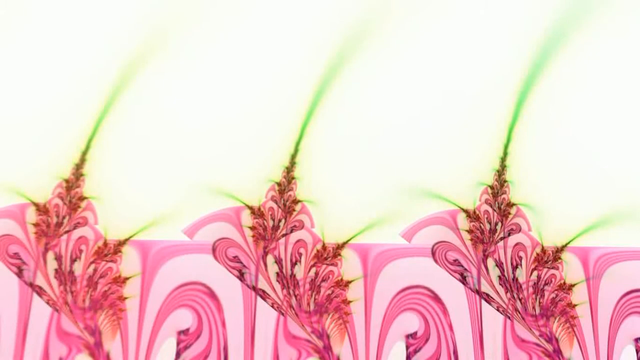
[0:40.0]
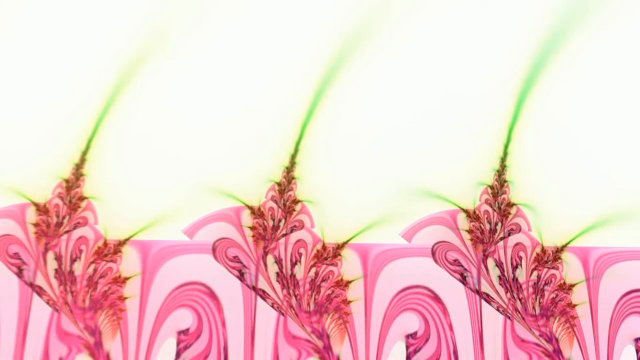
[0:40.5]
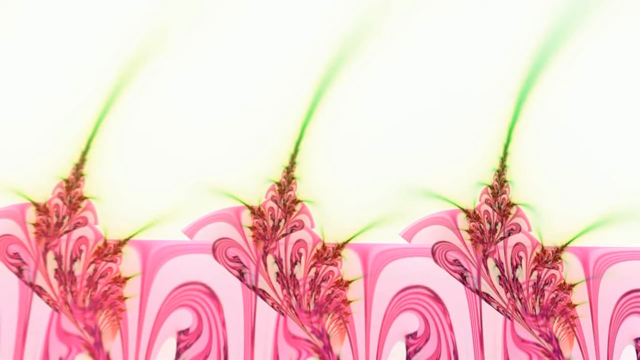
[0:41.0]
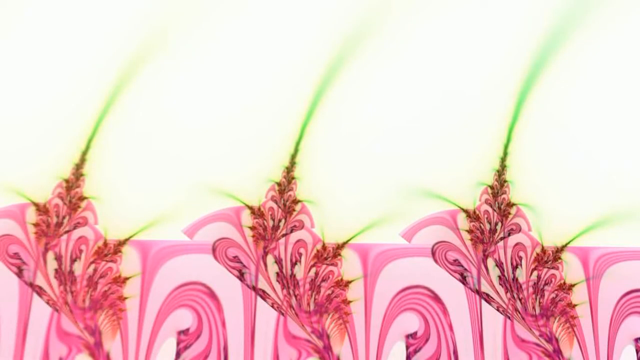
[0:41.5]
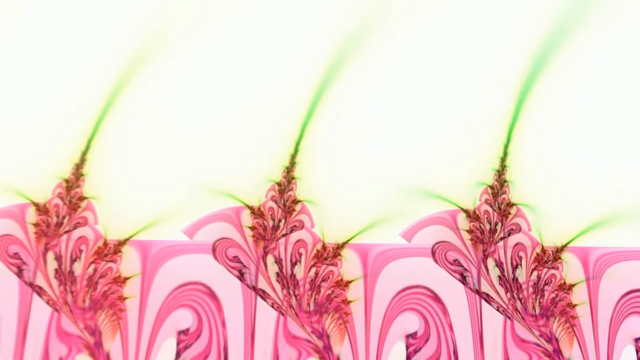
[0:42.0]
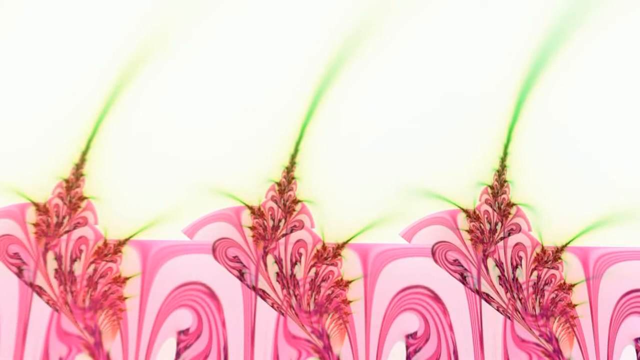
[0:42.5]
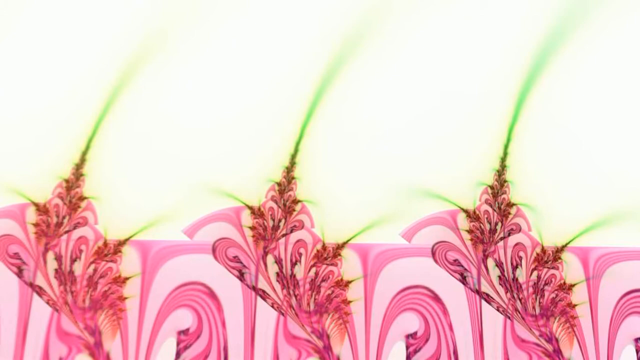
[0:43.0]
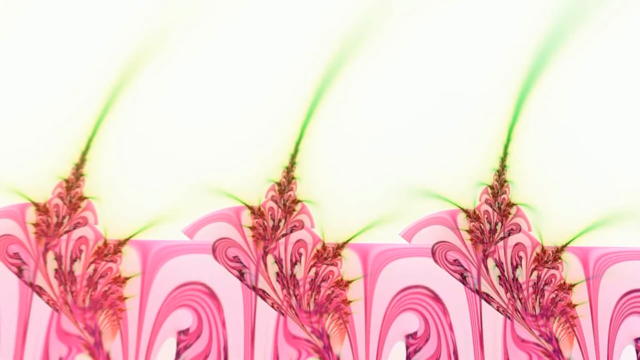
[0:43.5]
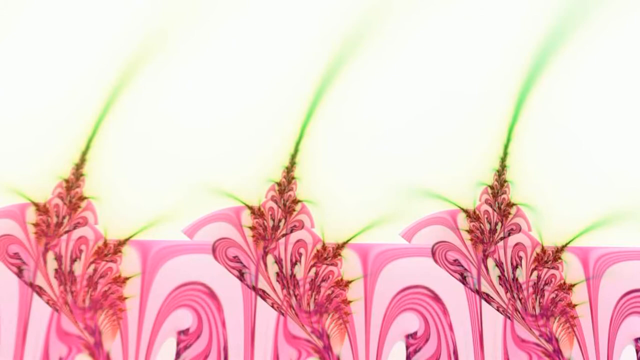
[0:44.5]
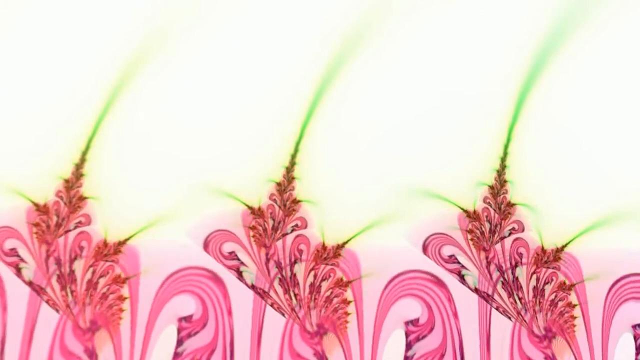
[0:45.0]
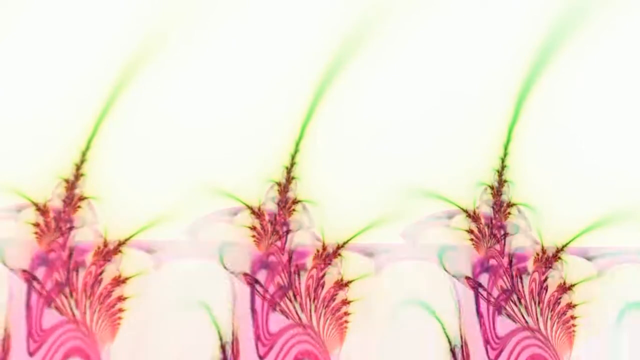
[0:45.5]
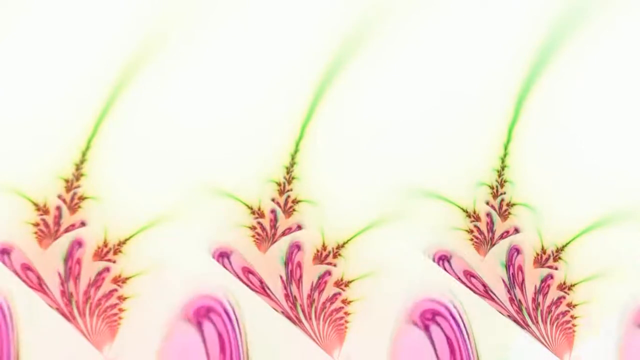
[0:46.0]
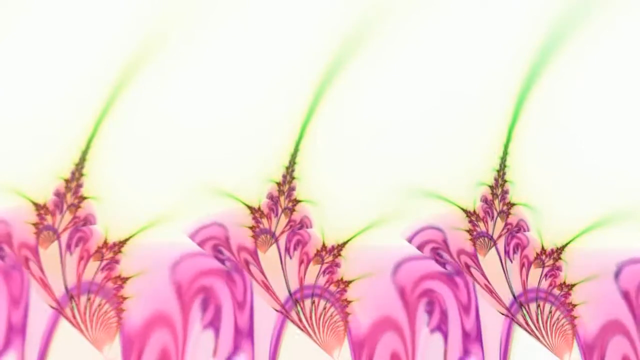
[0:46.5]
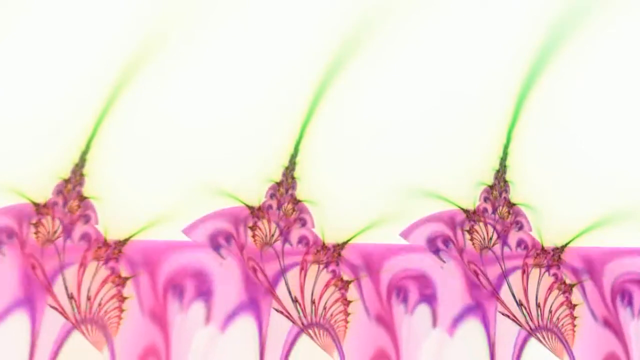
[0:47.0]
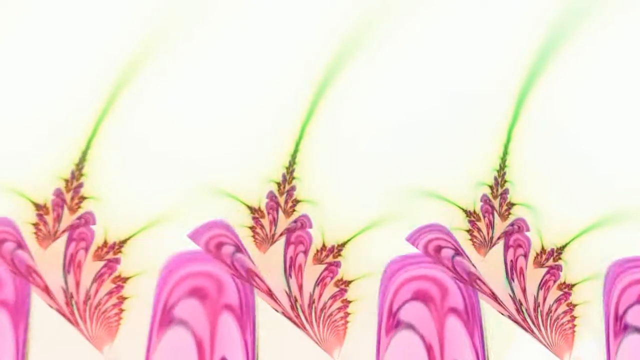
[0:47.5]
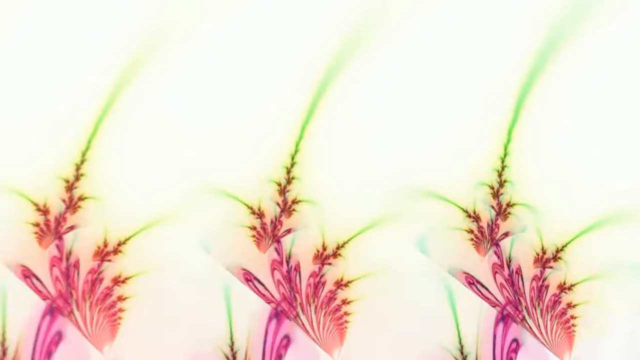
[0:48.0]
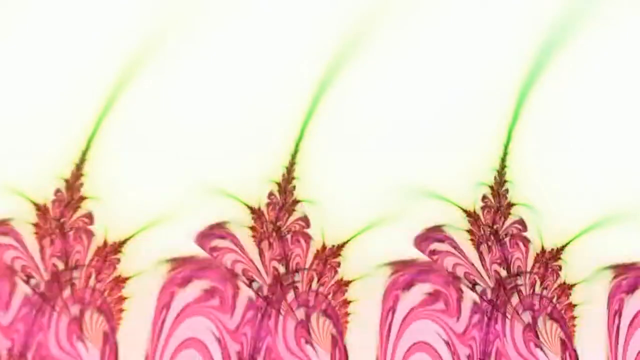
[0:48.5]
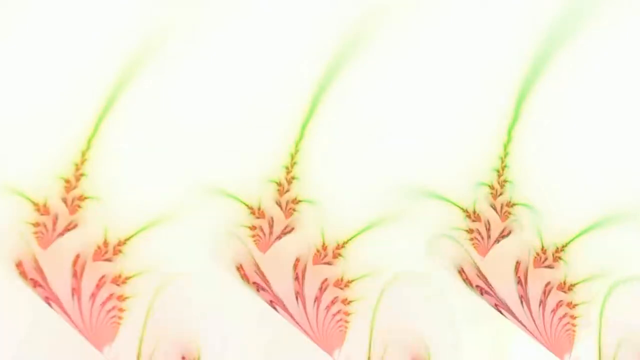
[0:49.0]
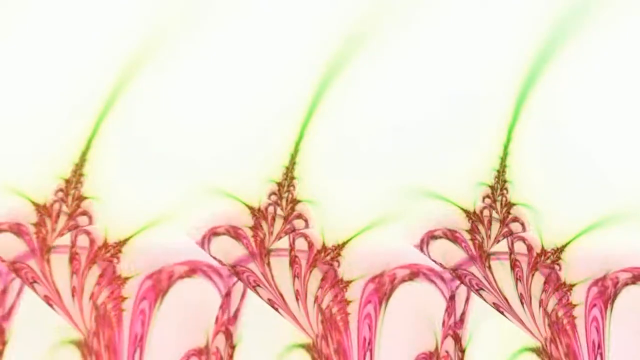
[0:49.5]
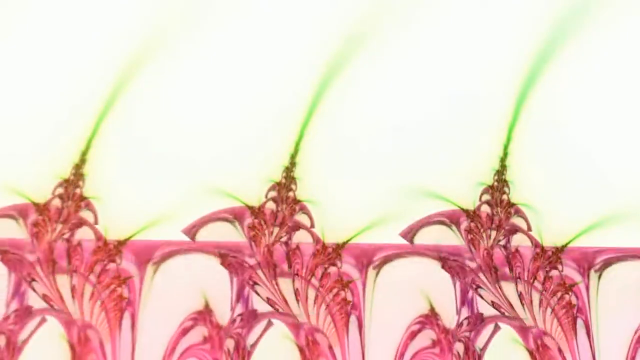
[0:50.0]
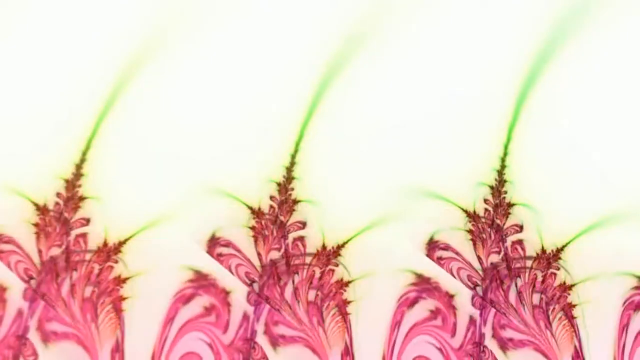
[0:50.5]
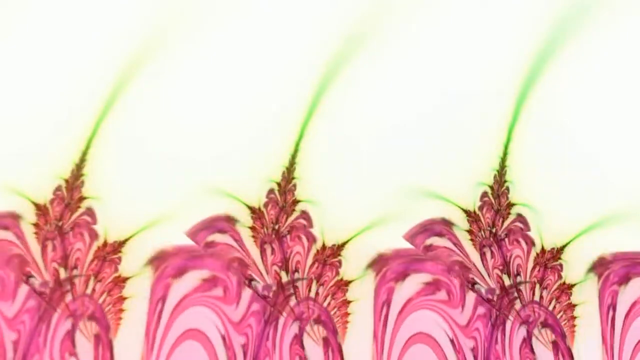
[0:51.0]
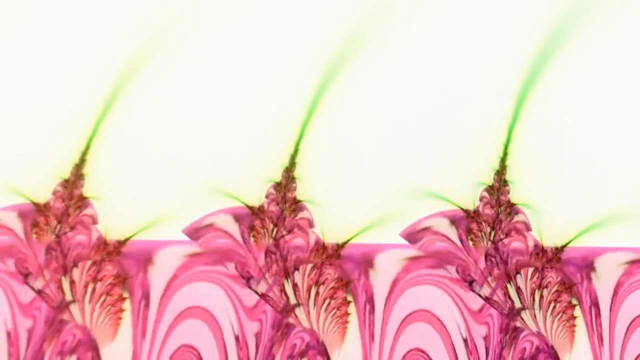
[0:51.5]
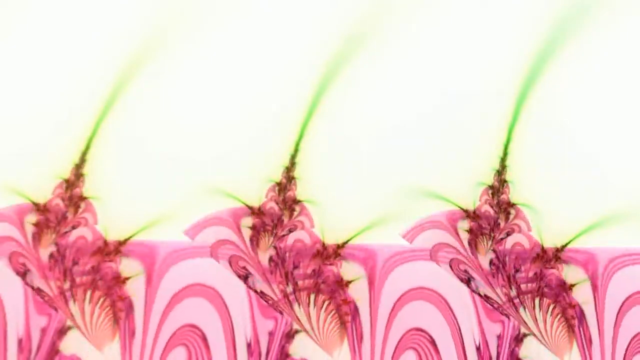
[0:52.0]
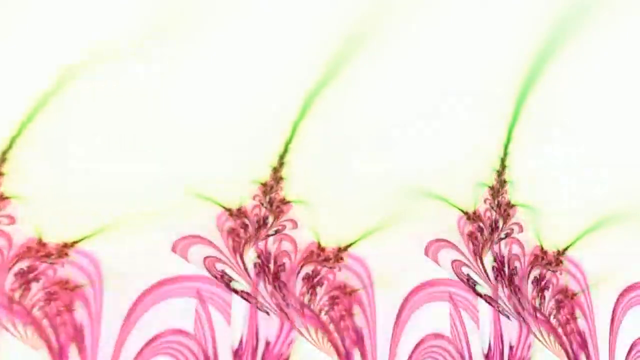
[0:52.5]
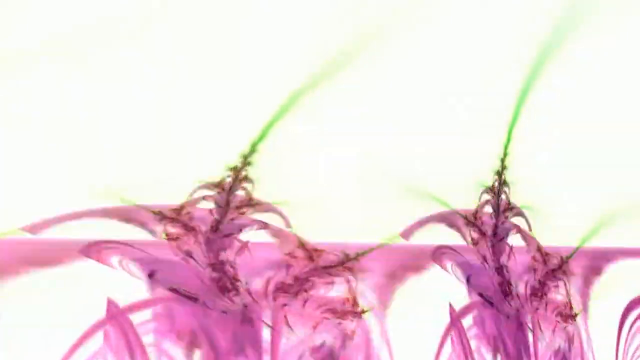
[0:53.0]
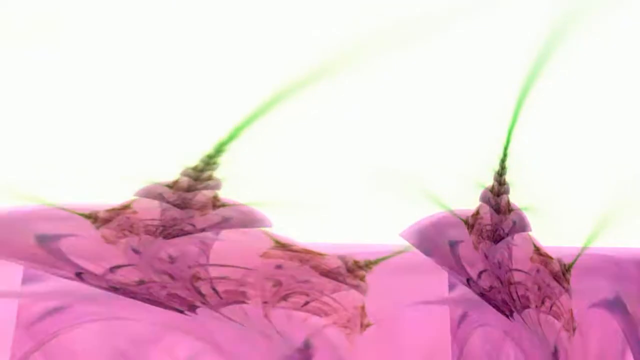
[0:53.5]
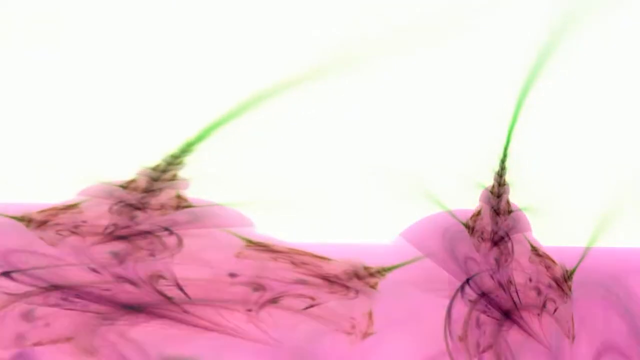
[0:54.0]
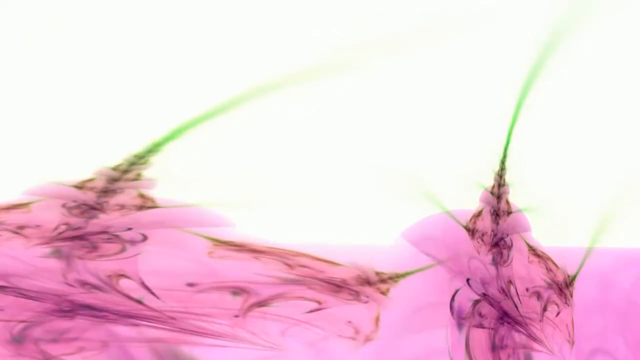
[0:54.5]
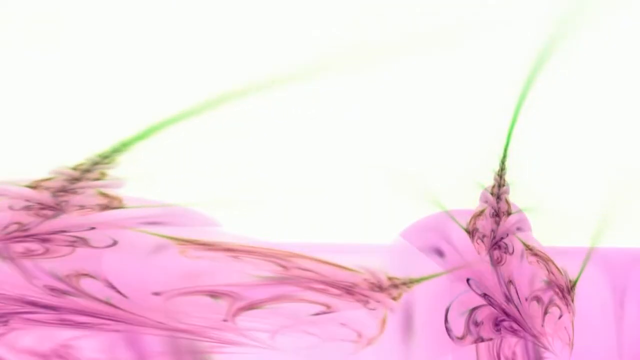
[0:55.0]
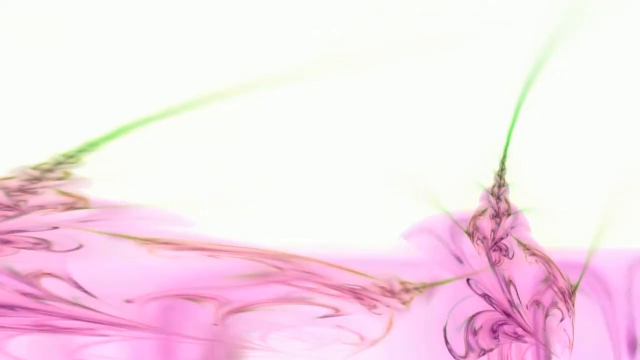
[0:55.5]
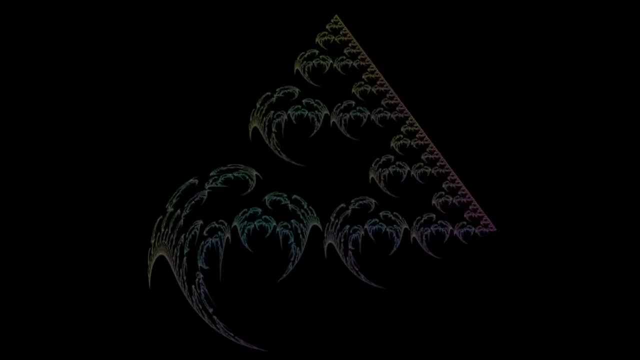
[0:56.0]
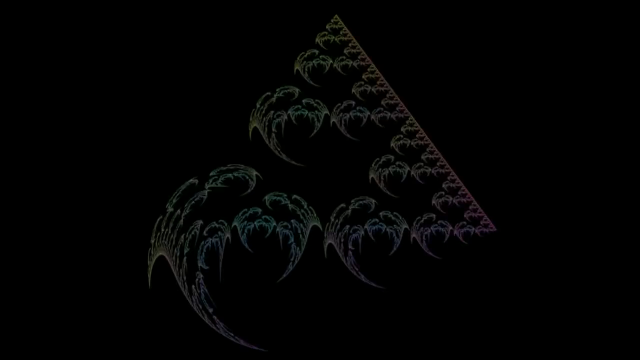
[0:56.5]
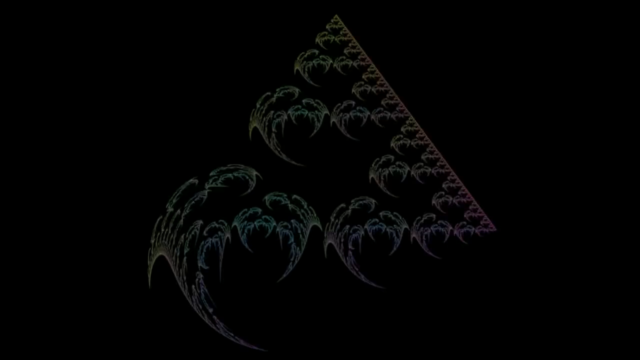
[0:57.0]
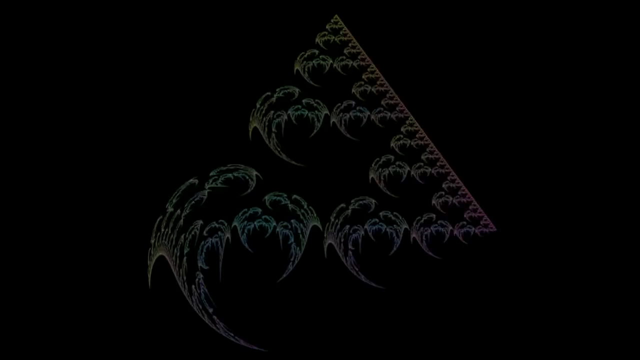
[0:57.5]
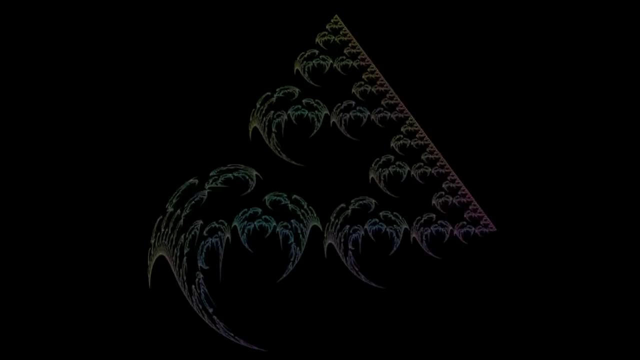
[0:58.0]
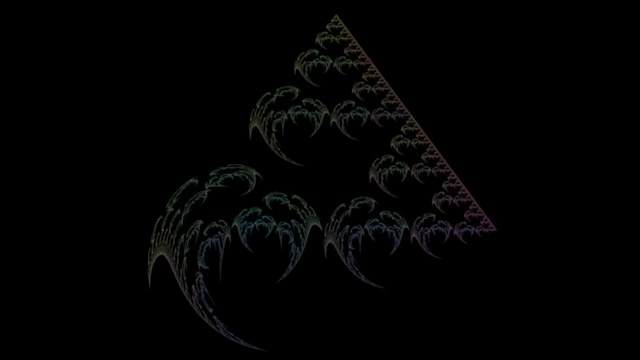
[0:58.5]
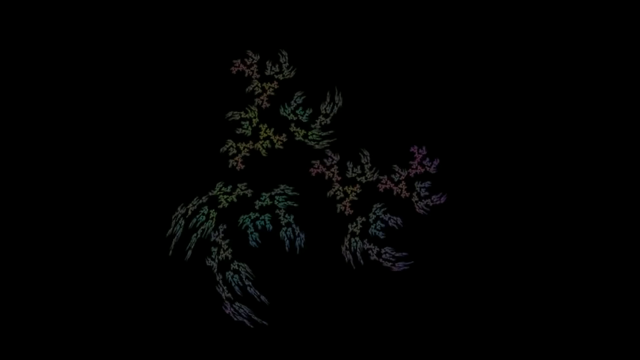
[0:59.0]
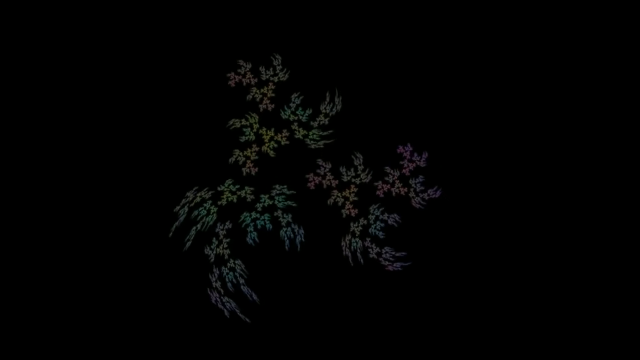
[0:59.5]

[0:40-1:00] Paisley-style designs in purples and maroons fill the bottom half of the image, with green colours shooting out the top. What looks to be some type of tile background stays still for a moment, then the tiles suddenly start to morph into different designs, getting larger and smaller while staying only on the bottom half of the video, and then change into bigger items. Three green colours shoot out the top of the paisley-style design and do not seem to change; they stay centered and then stretch out as the image takes over the entire screen. The scene then goes to a black background, where three different sets of images in pastel colours appear. They kind of form a giant triangle, then start to swirl and move in the background, looking almost like waves that turn into smaller flowers that go into themselves as they swirl.